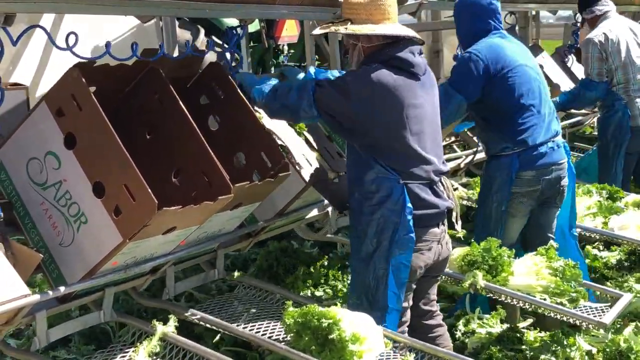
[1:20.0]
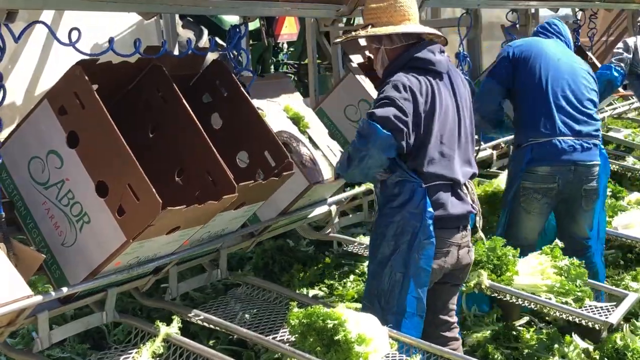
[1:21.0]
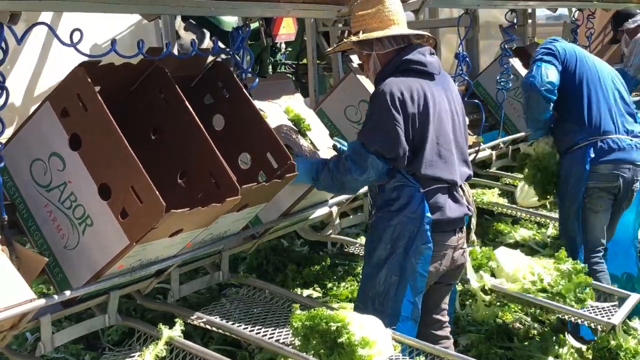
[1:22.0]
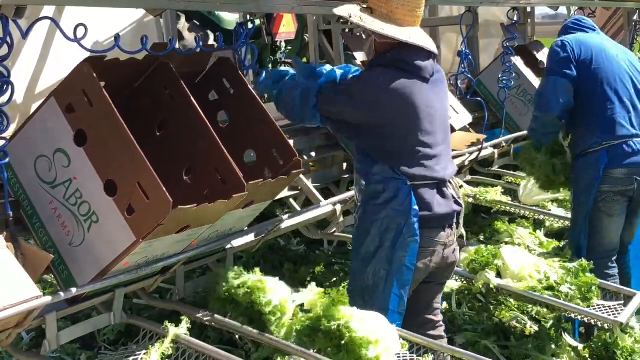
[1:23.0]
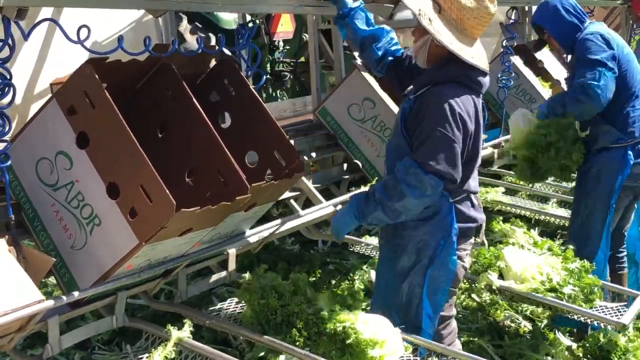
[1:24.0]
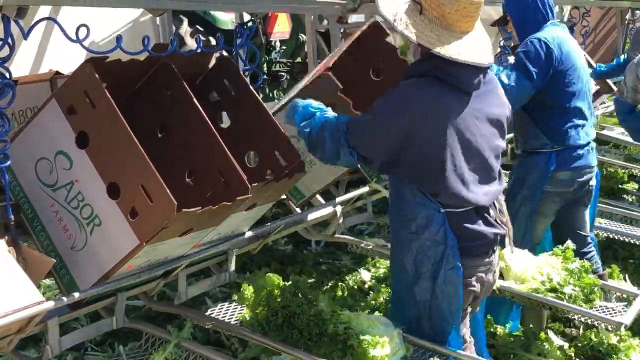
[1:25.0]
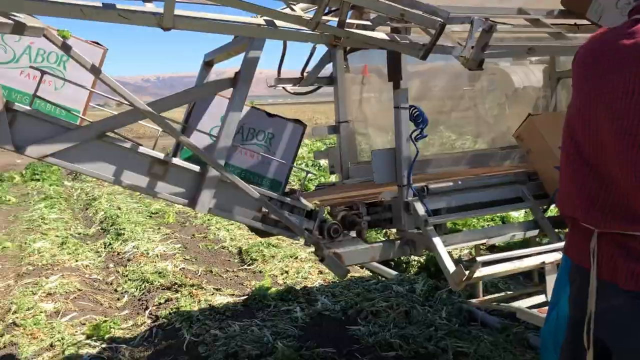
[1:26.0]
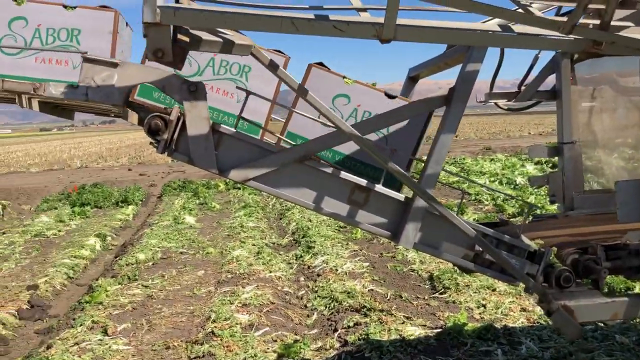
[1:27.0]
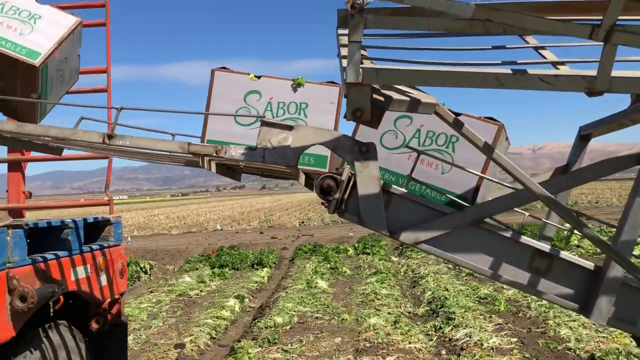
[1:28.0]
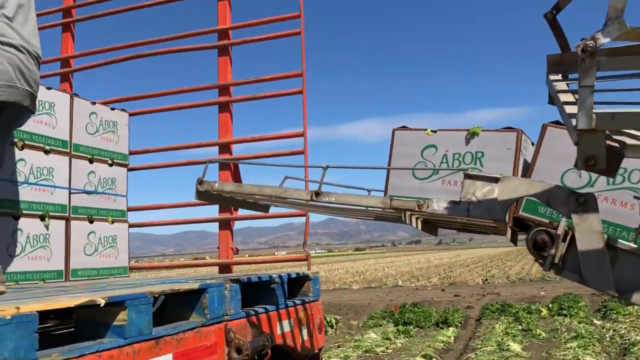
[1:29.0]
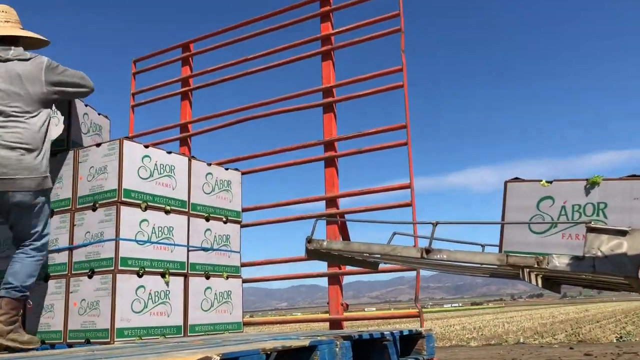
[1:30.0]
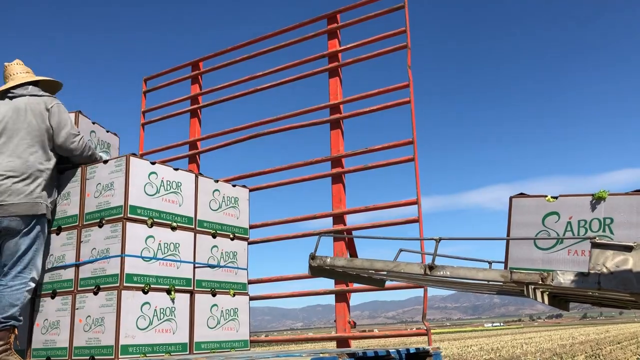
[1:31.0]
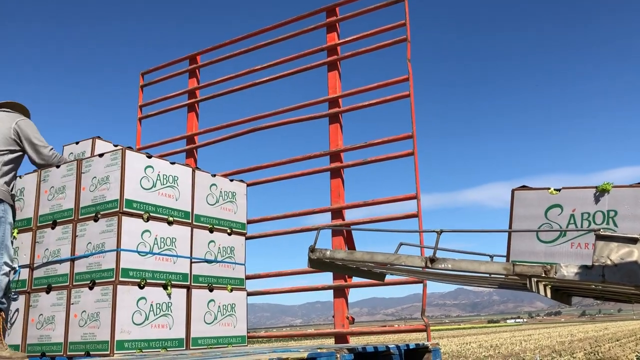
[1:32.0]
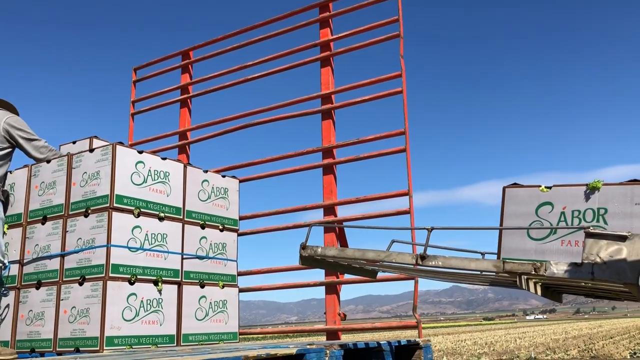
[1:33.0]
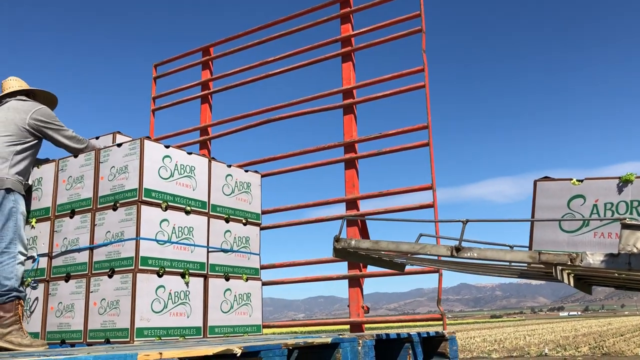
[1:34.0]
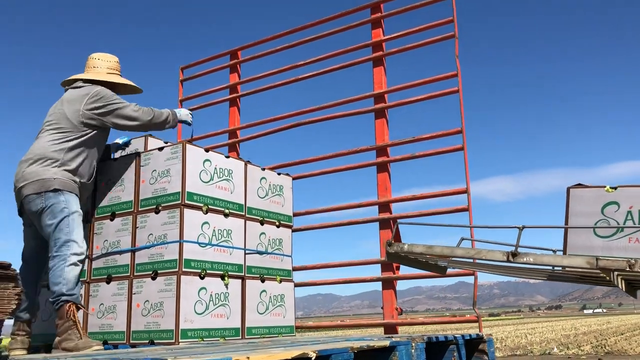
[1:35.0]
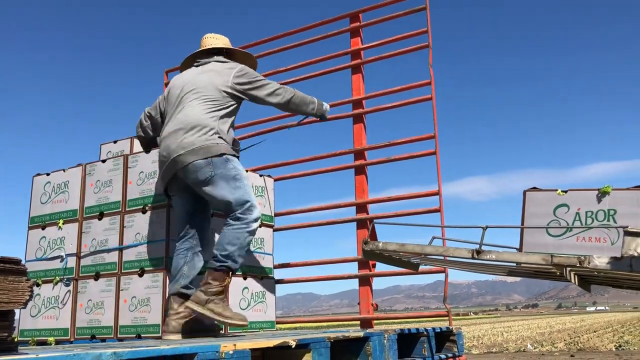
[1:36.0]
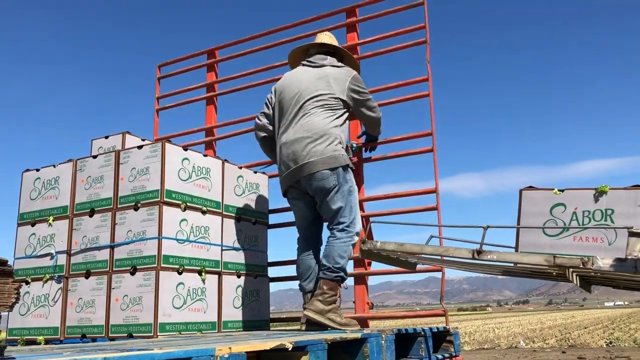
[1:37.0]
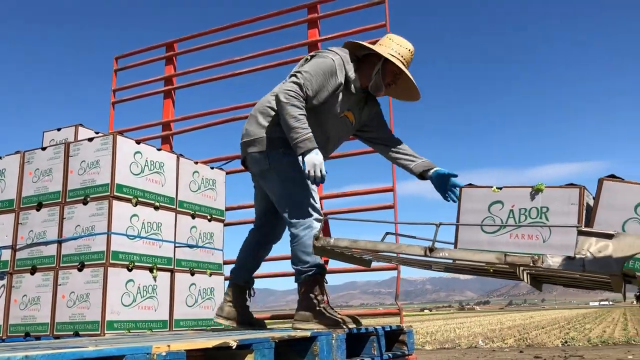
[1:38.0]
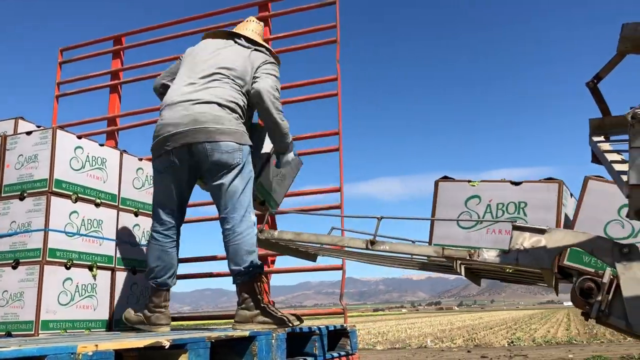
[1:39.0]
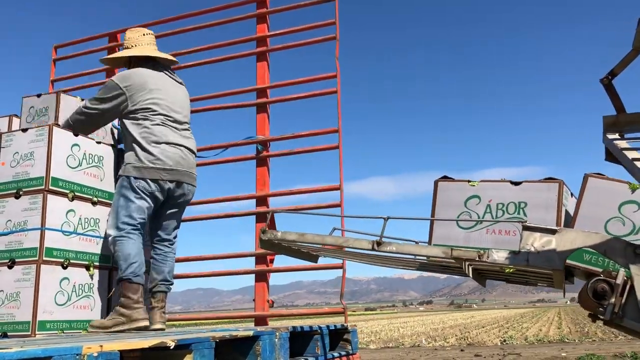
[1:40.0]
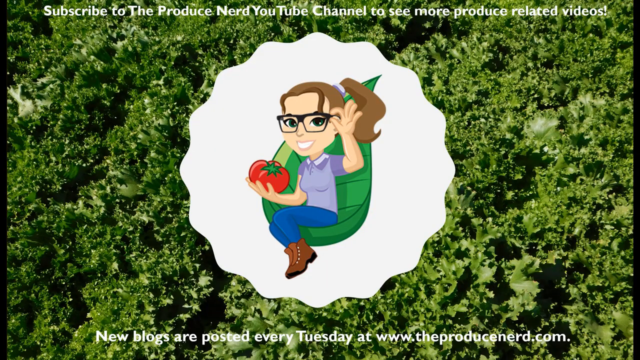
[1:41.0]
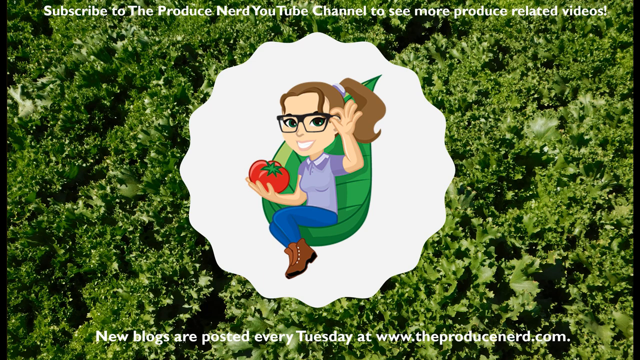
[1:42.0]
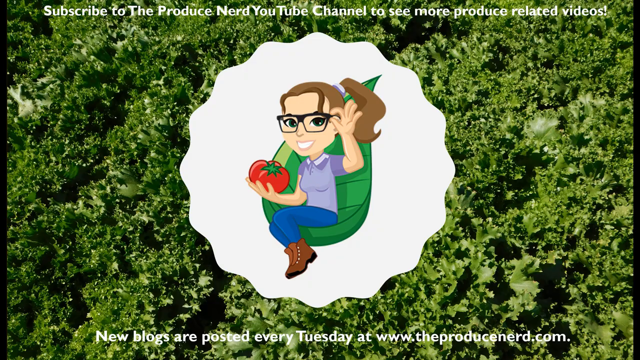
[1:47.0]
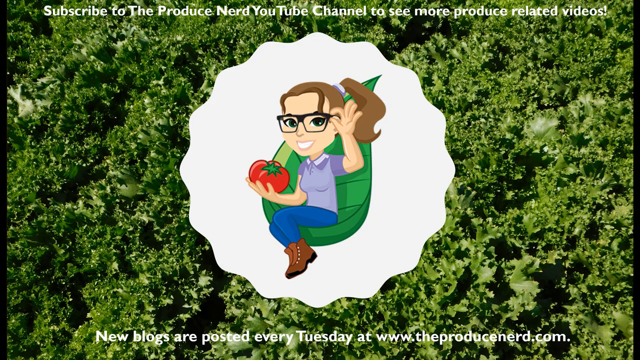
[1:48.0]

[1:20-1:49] The worker closes up the box, with a bit of the leaves visible sticking out of a crack in the top. He finishes closing the box and securing the lids, then lifts it up on the rack and pushes it over the side into a small window in the front; where it goes is not apparent. He picks up another, empty box, places it in the rack, and fastens the lids open. The camera cuts to a bunch of these boxes traveling on a conveyor belt to the left side of the screen. They are picked up by another man who appears to be standing on the trailer from the start of the video. He places the boxes onto a stack of similar boxes, all of which bear the text "SABOR". He places a box on the top of the pile and appears to fasten it to the frame behind him before picking up another box.